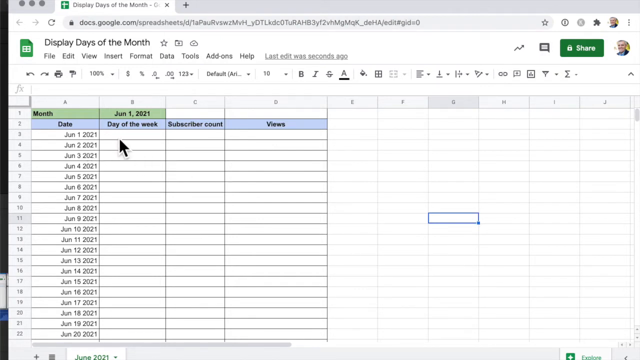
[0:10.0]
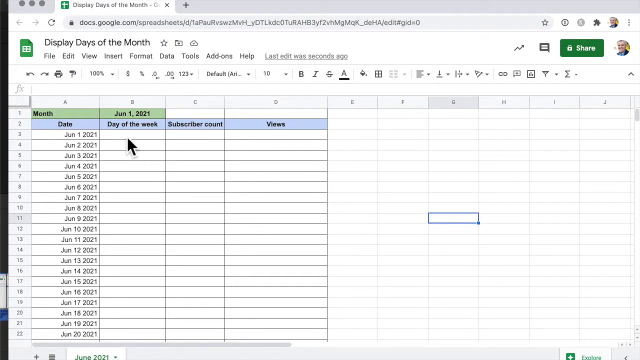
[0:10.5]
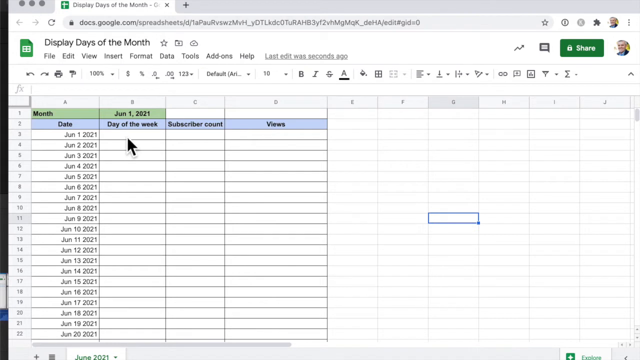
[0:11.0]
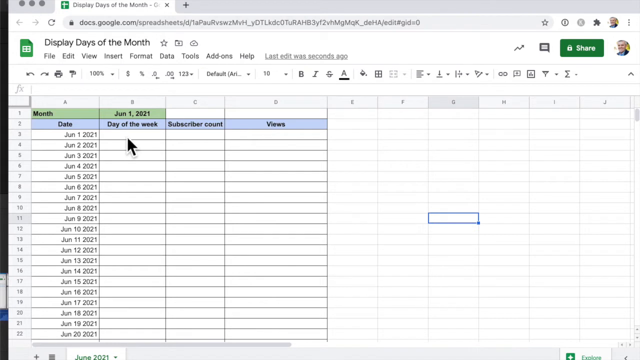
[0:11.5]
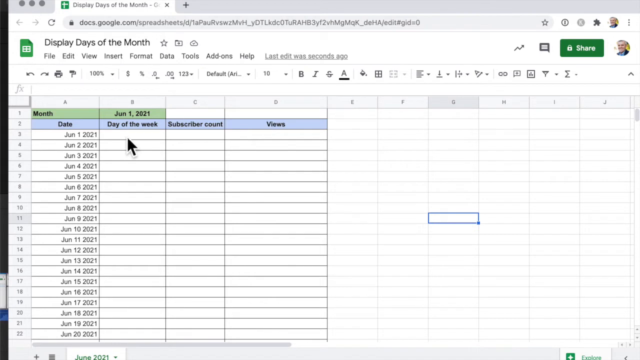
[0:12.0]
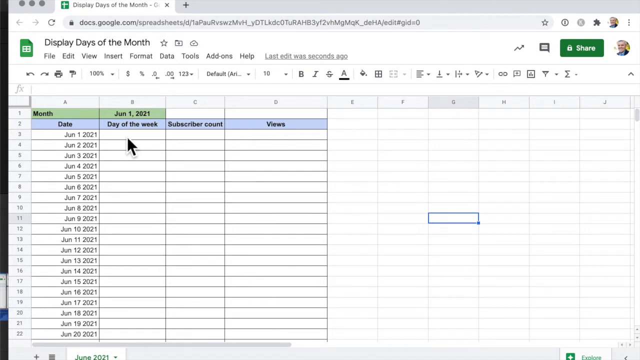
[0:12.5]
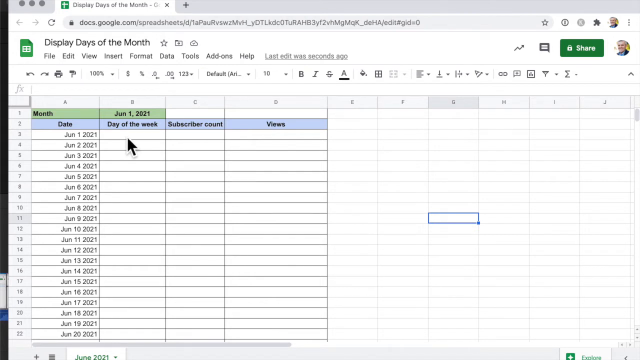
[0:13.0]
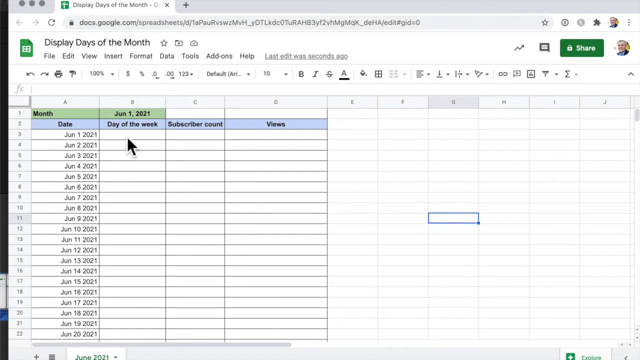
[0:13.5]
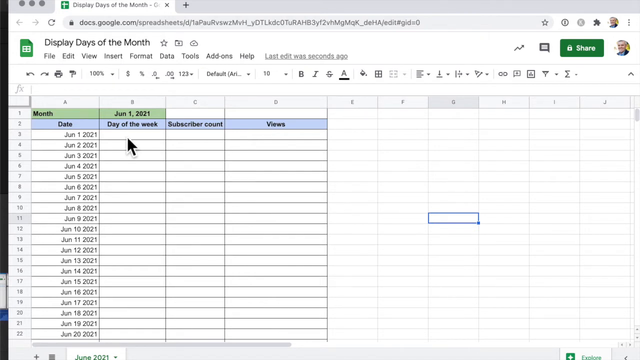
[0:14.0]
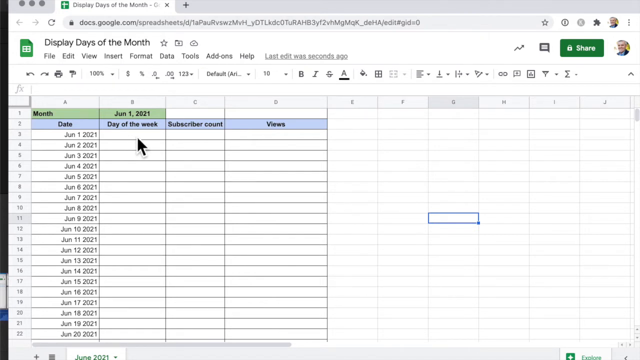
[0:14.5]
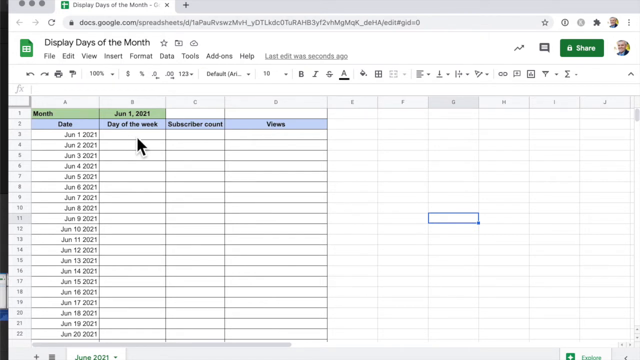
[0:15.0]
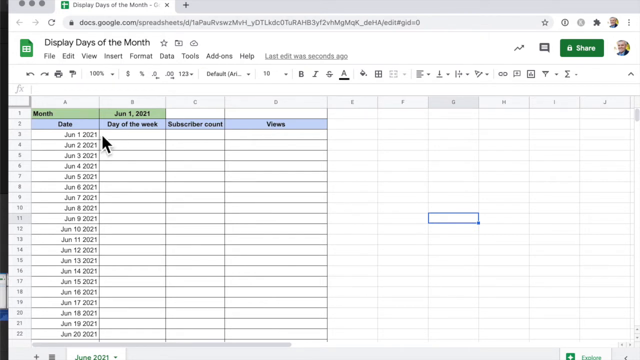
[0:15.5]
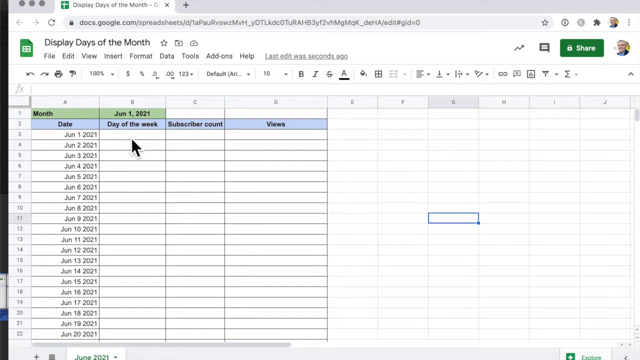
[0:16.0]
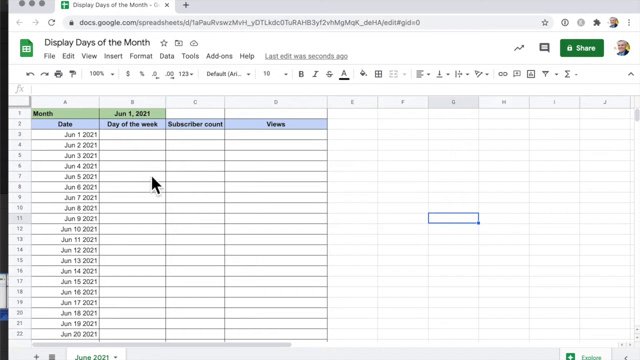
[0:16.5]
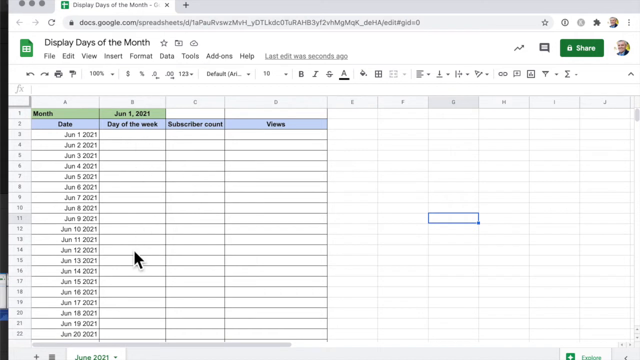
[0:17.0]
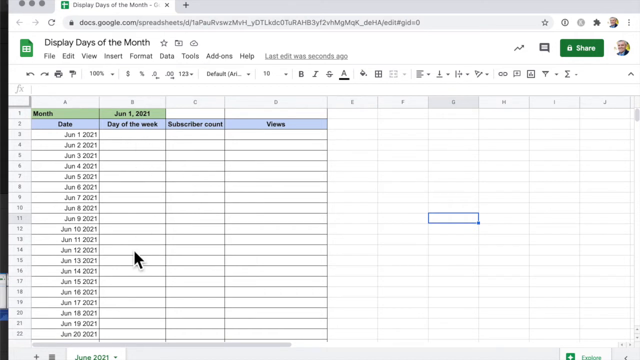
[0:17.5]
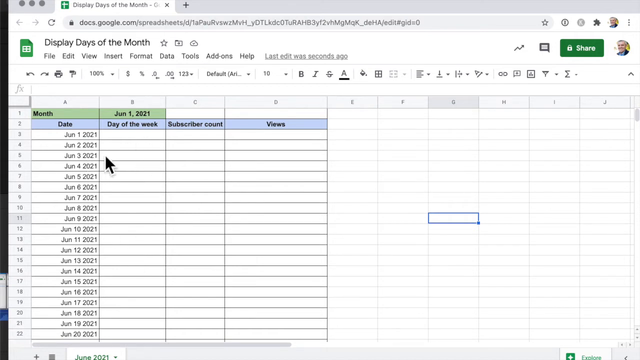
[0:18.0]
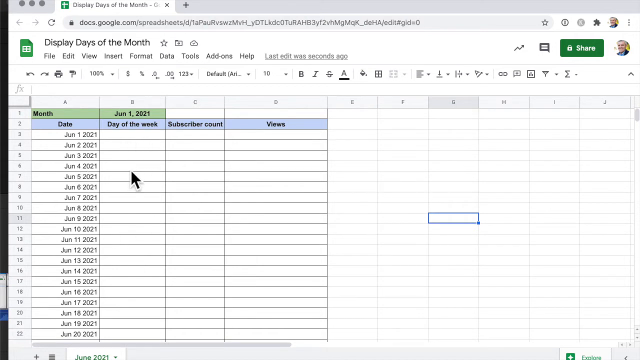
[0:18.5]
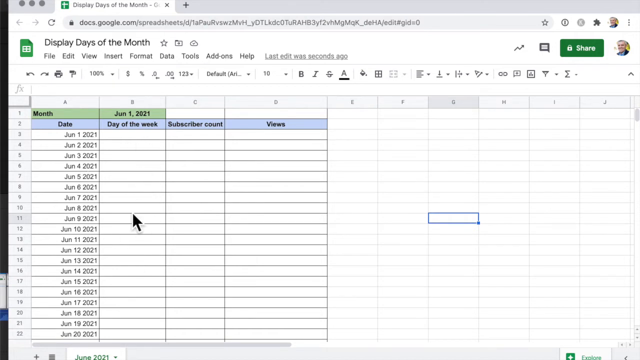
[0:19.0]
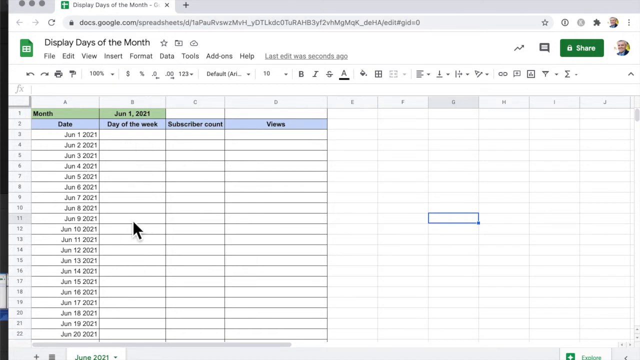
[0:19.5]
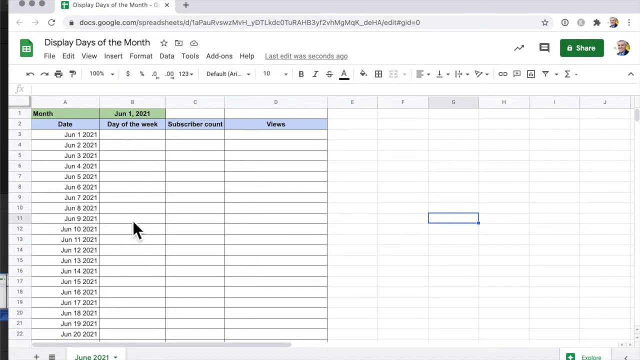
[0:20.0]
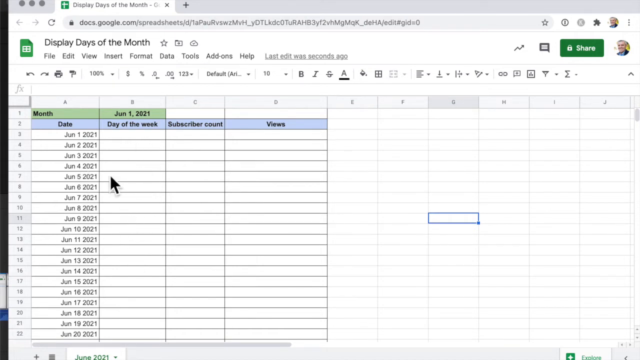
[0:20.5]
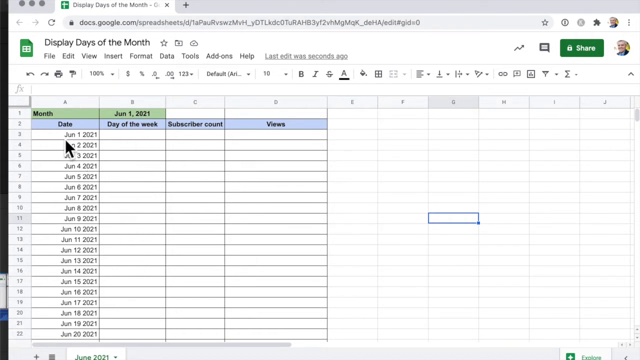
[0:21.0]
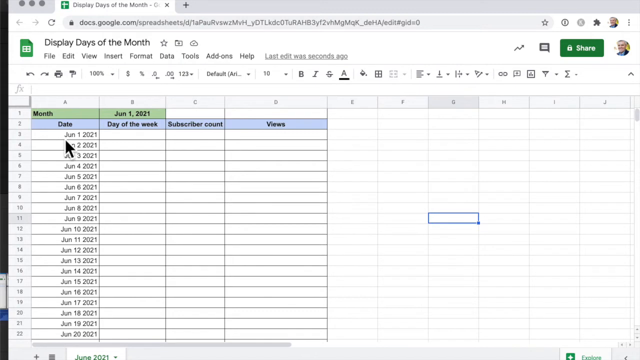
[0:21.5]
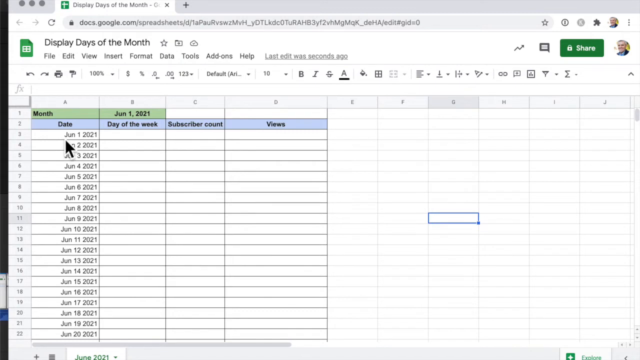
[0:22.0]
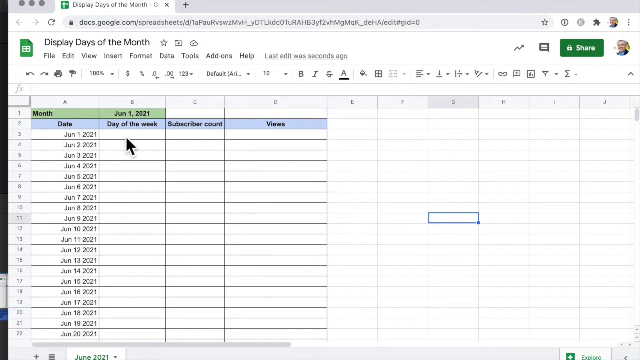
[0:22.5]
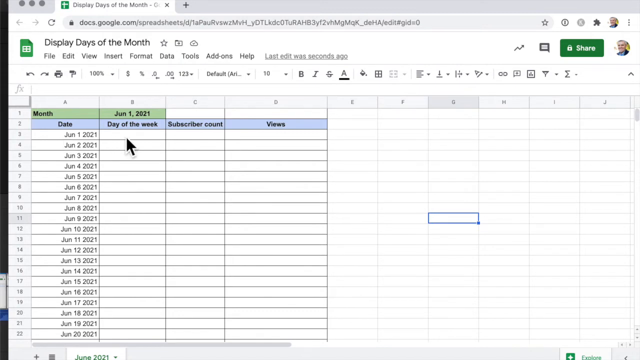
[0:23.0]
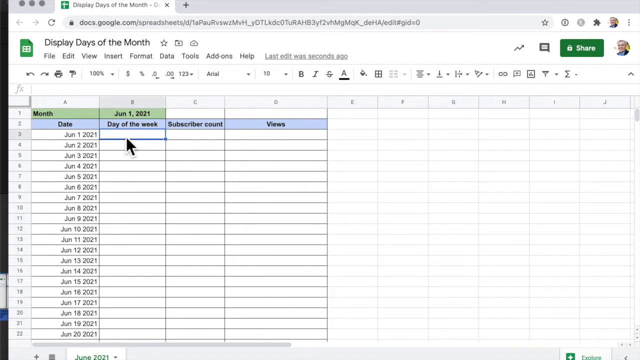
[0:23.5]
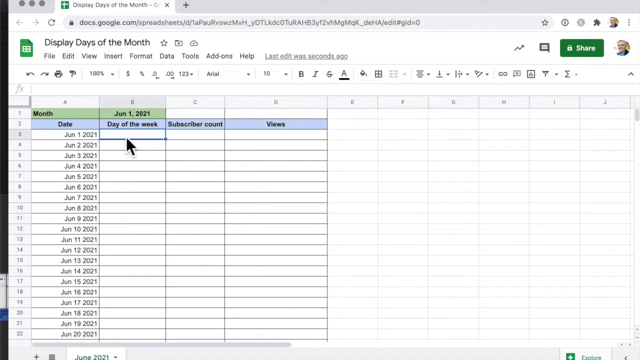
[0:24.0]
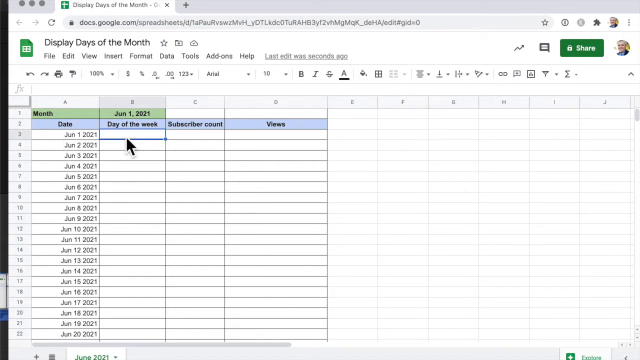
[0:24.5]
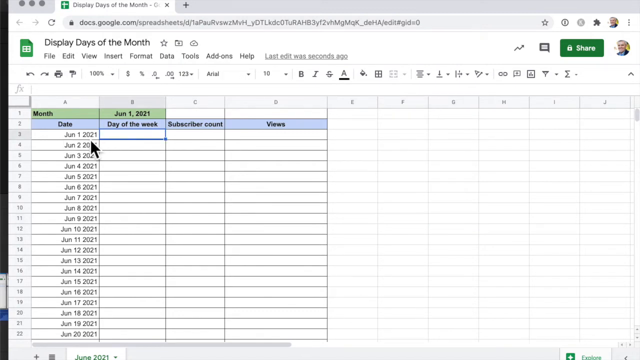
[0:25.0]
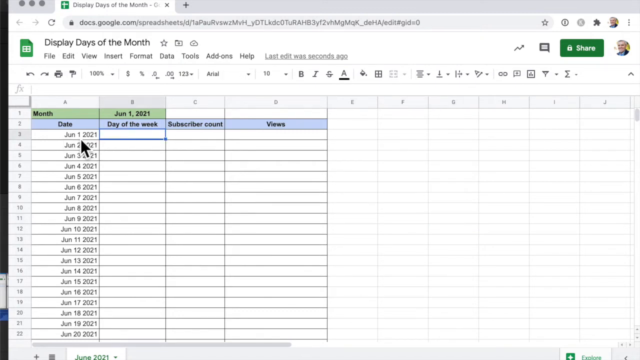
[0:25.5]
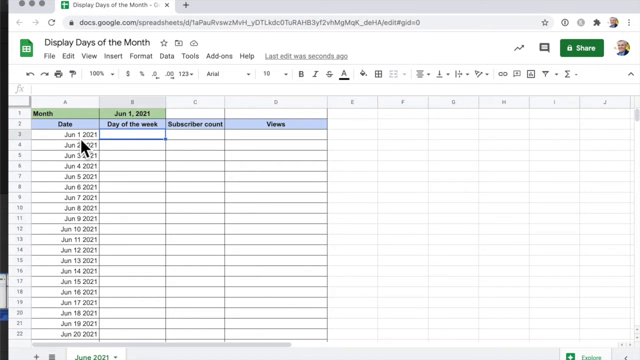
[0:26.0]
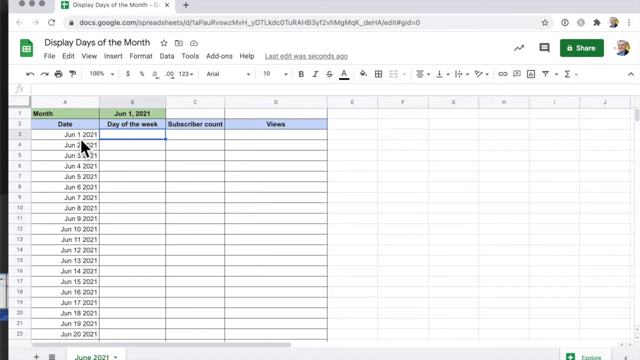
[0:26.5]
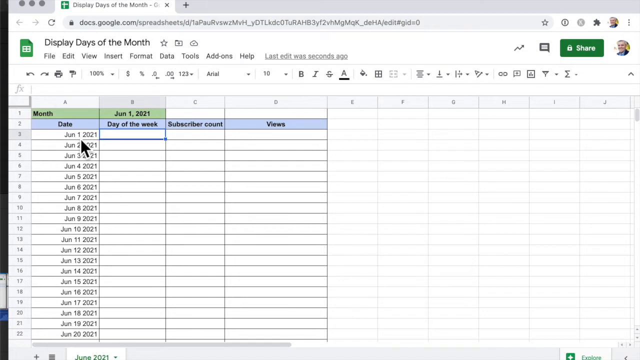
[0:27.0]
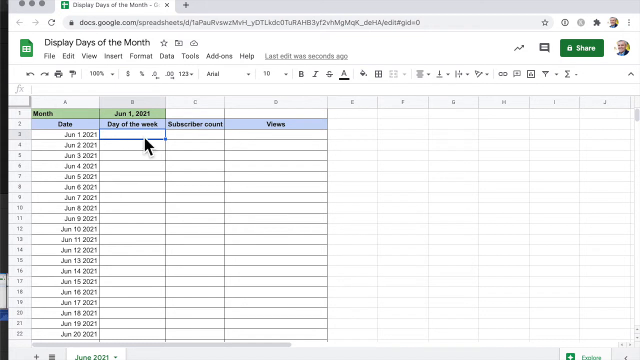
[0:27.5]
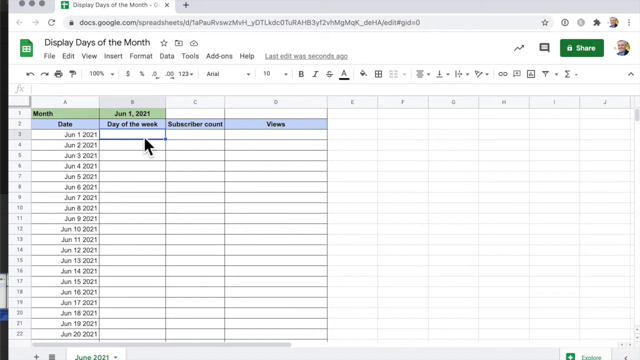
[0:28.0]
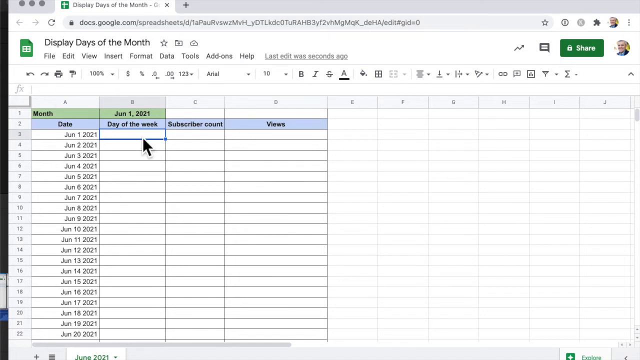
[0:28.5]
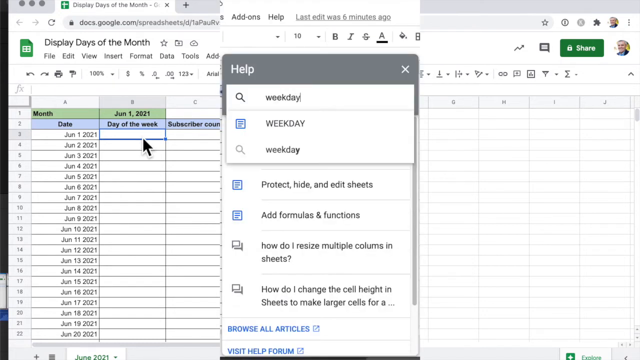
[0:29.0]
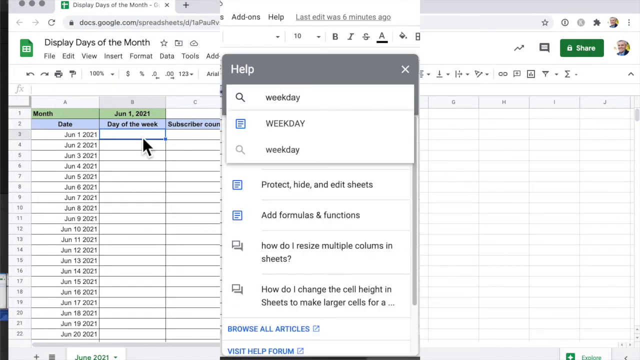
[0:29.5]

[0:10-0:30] The cursor hovers around the second blue box, labeled "day of the week," and moves over the boxes and columns below it, which are all empty, pointing to certain dates on the left-hand side. The person clicks the box underneath "day of the week," and a help prompt appears on screen; no button or icon on the screen is pressed, so it seems a keyboard shortcut was used. The cursor goes to the top, then over to the left side toward the dates, and clicks the box to the right of the first date. The person then types "weekday" into the help box.